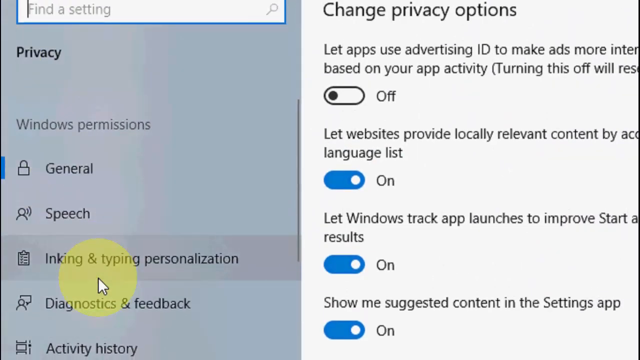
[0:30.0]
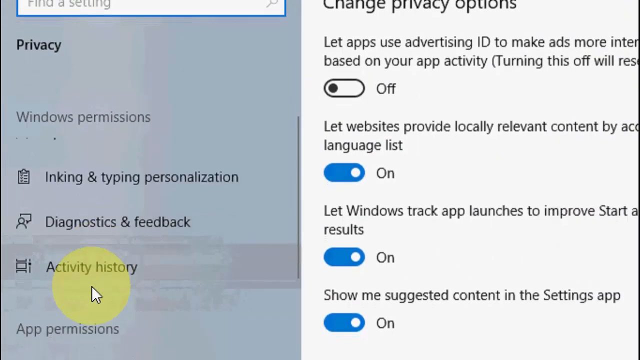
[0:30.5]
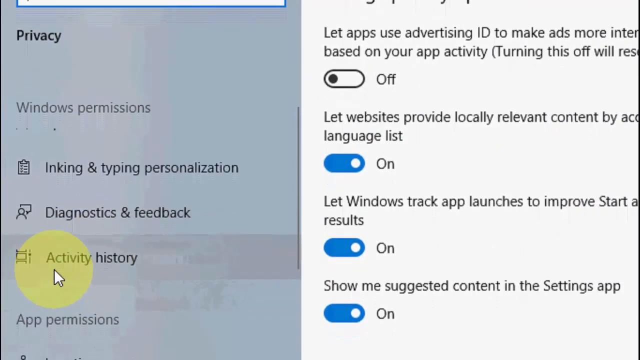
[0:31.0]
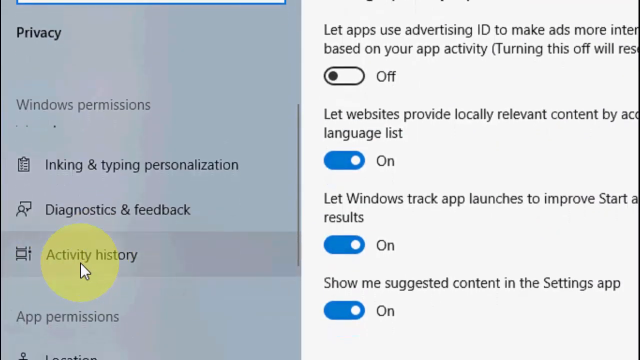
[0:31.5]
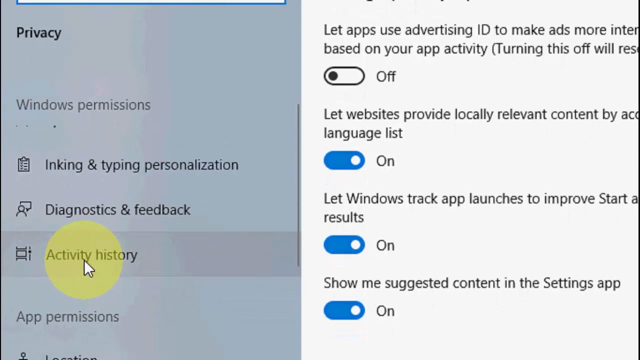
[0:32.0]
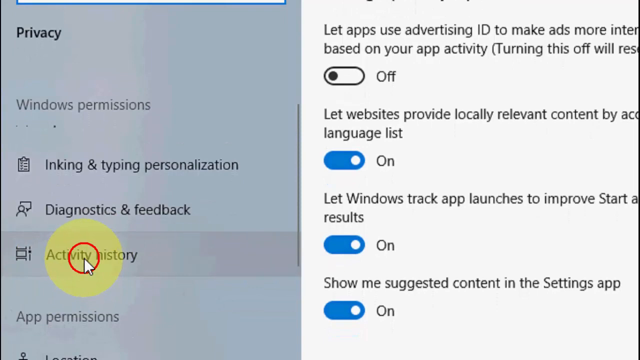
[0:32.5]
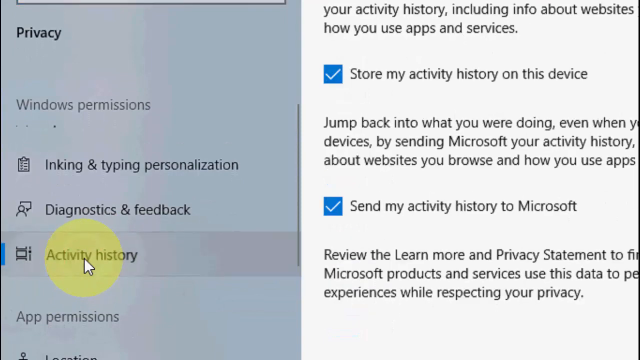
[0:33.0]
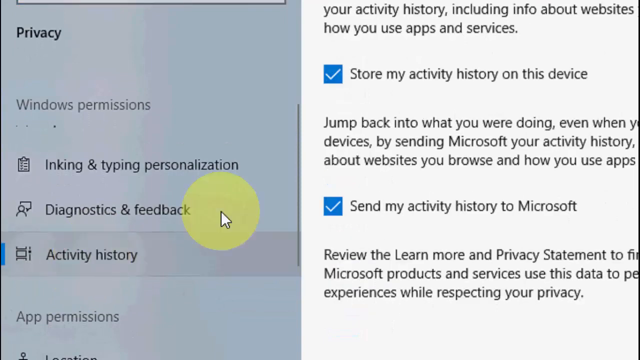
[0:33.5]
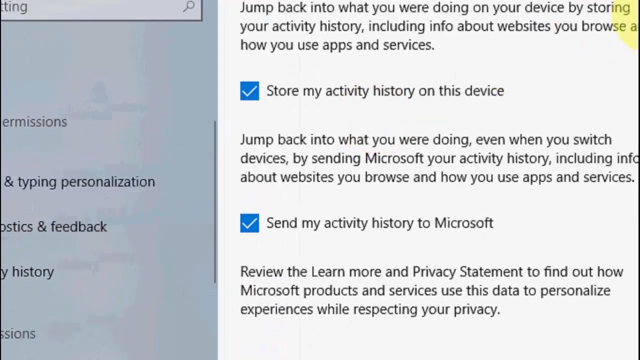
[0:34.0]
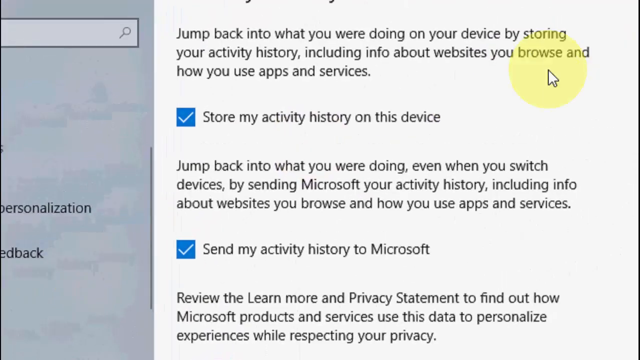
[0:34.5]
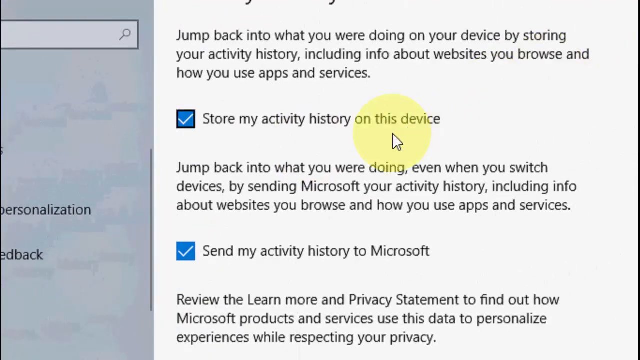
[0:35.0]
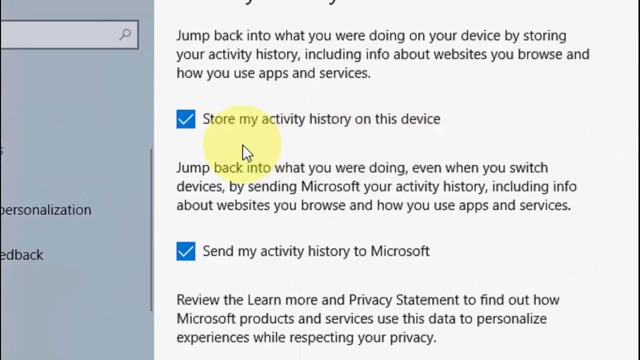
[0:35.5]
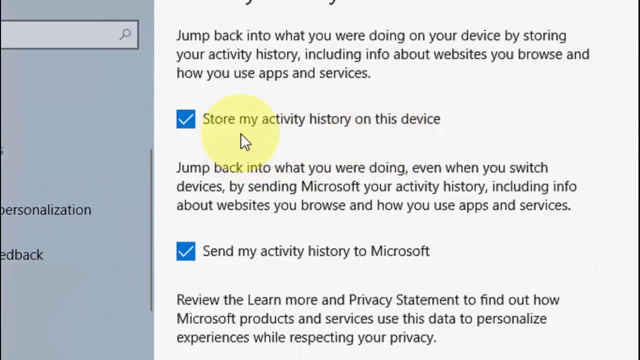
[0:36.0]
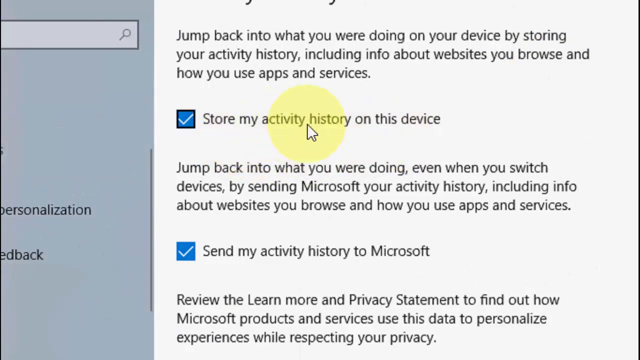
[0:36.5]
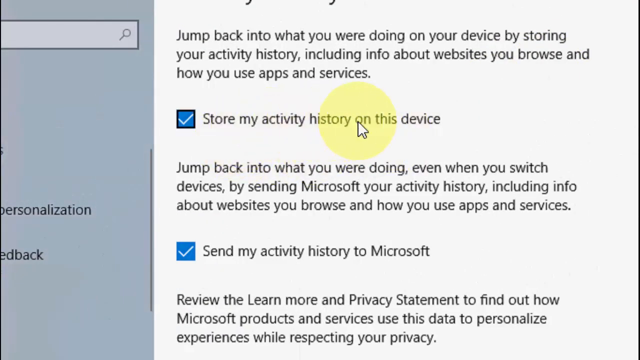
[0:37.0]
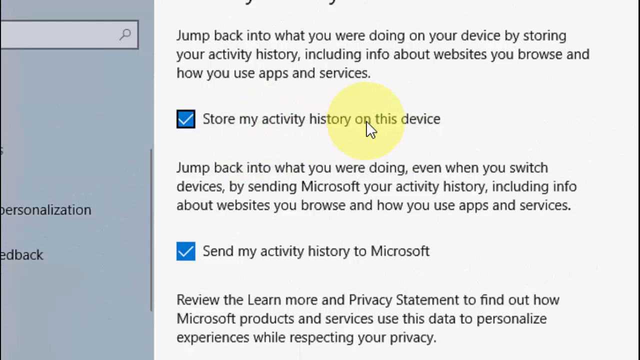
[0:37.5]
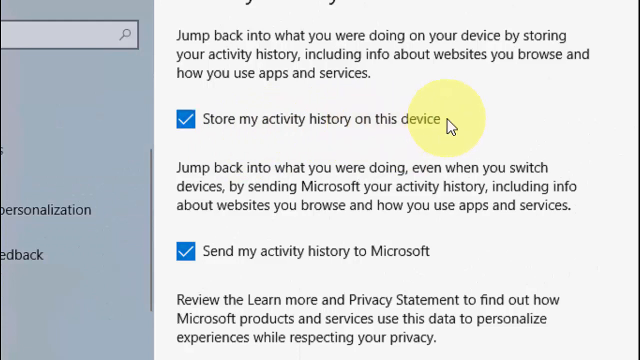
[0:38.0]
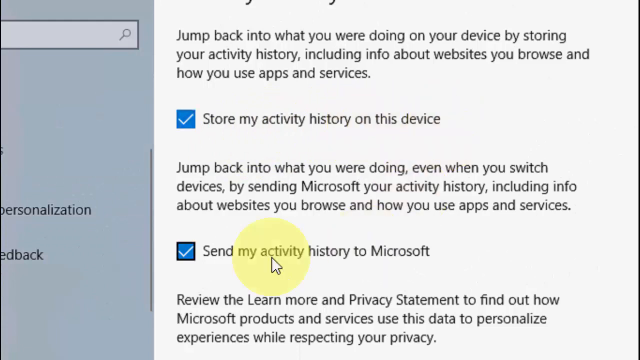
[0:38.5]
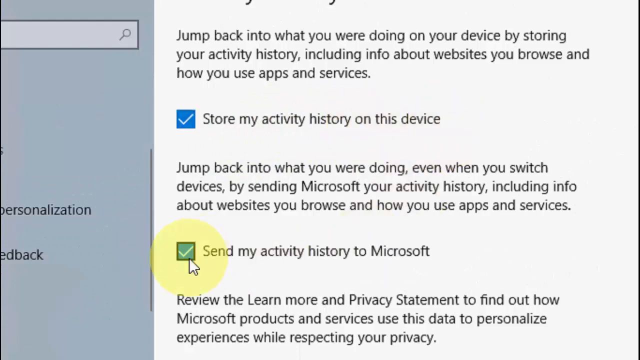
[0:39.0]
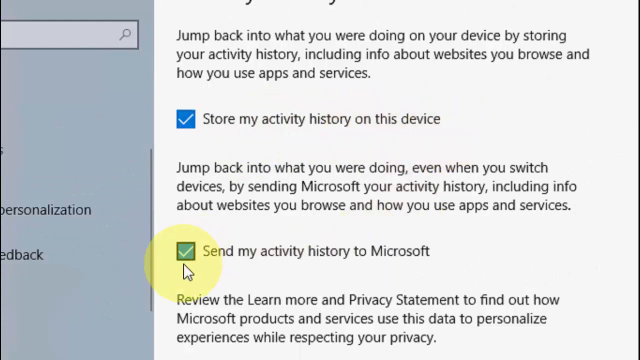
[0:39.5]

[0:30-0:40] A close-up of a split web page: one side has a gray background and the other a white background. At the top of the left-hand side is a search bar, with the word "Privacy" right underneath it. Toward the bottom left is a cursor arrow with a yellow highlight around it. In the white section on the right it says "Change privacy options"; the top toggle is in the off position, while the two right below it are both on. The cursor scrolls down on the left-hand side, more options become visible, and it hovers over one that says "Activity history". The cursor clicks Activity history, swiftly zooms to the far right corner of the screen, then bounces back and stops over a line of text that says "Store my activity history on this device", next to which is a blue box with a white check mark. The cursor hovers over that line, moves left, then right again, before moving down to the second option, which also has a blue box with a white check mark and says "Send my activity history to Microsoft". The cursor stops right at the box and then begins to move along the line of text.